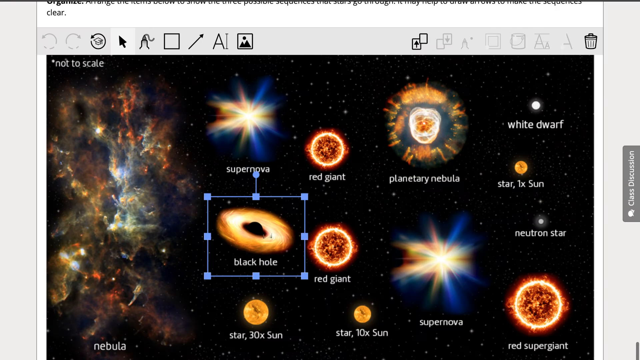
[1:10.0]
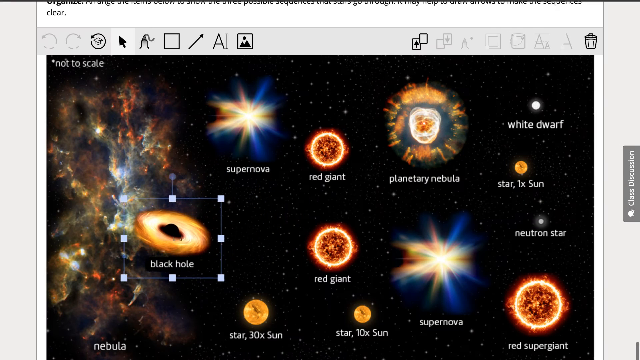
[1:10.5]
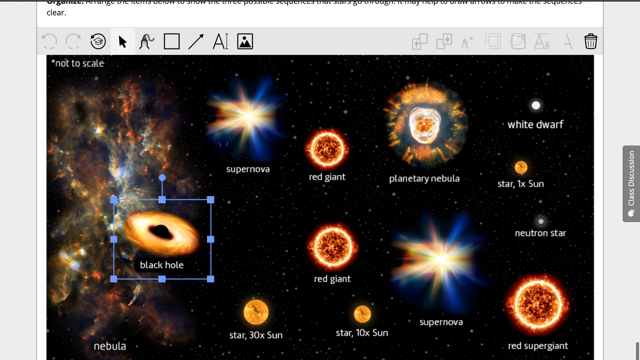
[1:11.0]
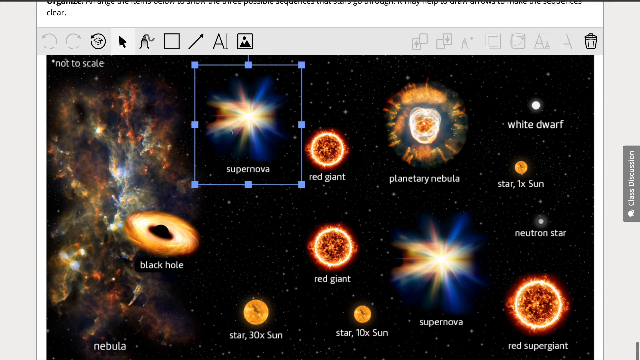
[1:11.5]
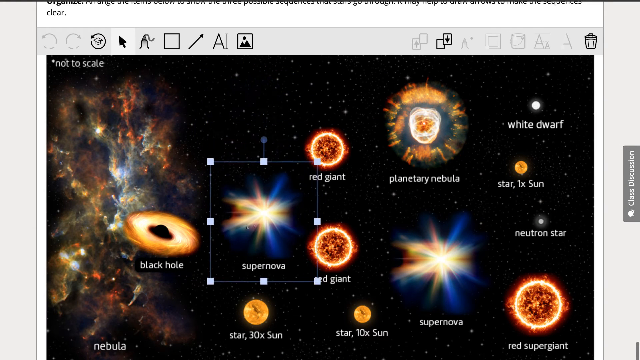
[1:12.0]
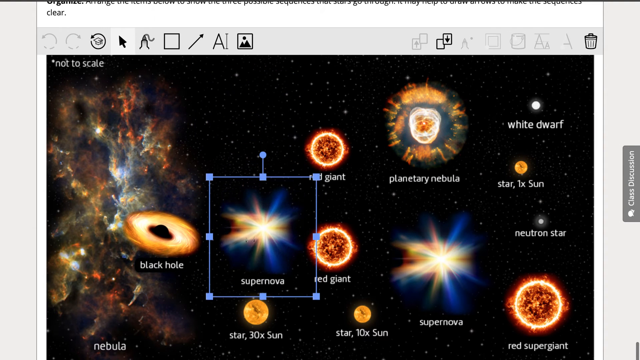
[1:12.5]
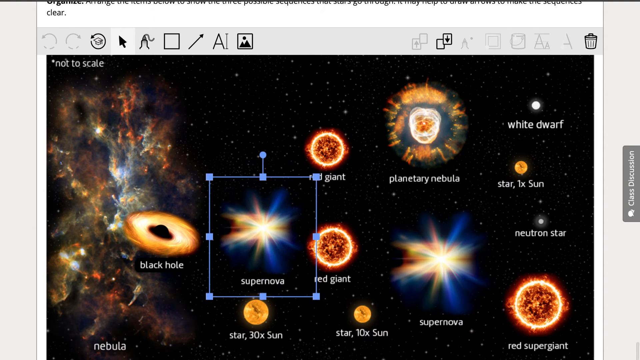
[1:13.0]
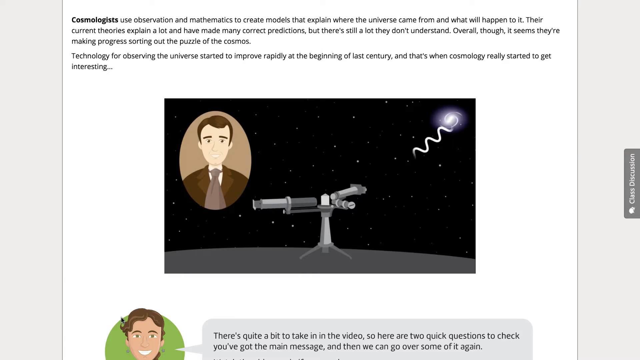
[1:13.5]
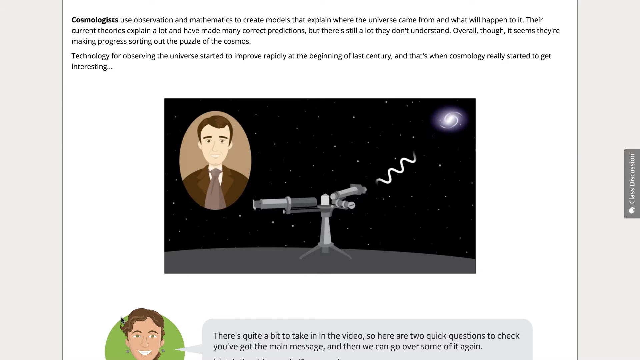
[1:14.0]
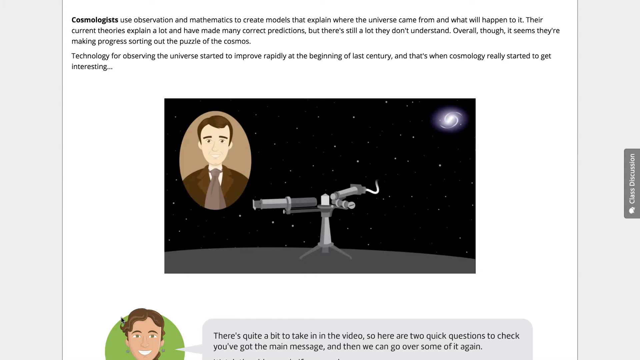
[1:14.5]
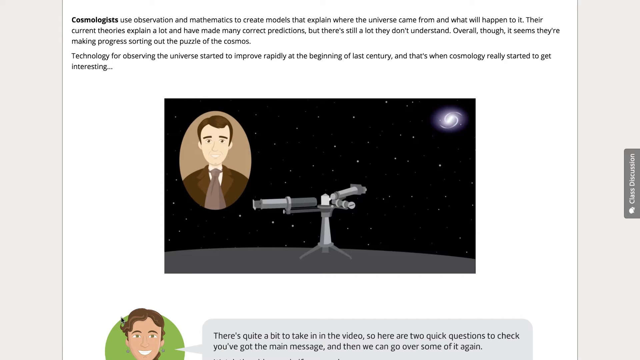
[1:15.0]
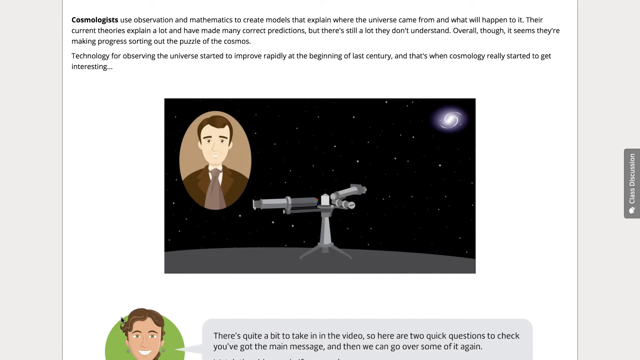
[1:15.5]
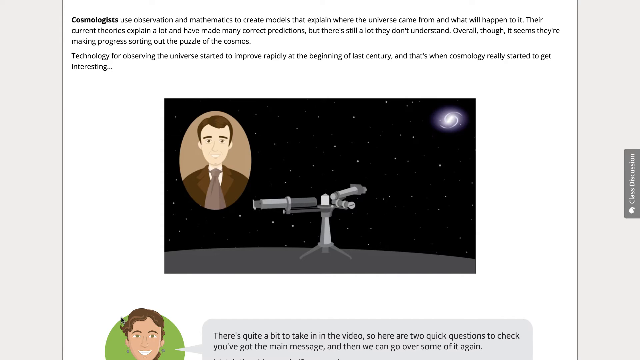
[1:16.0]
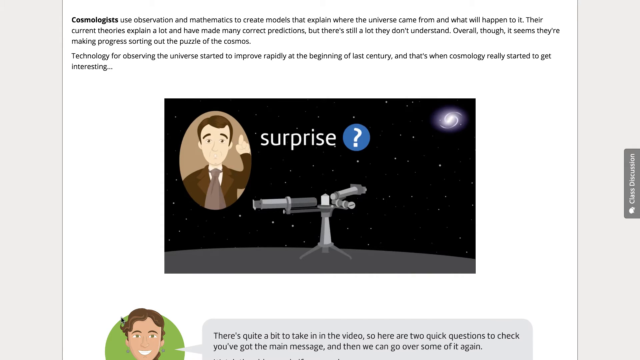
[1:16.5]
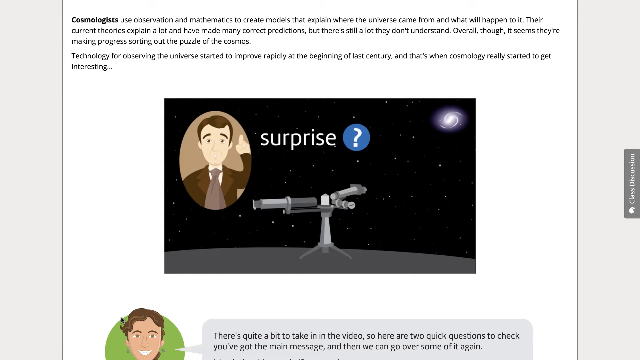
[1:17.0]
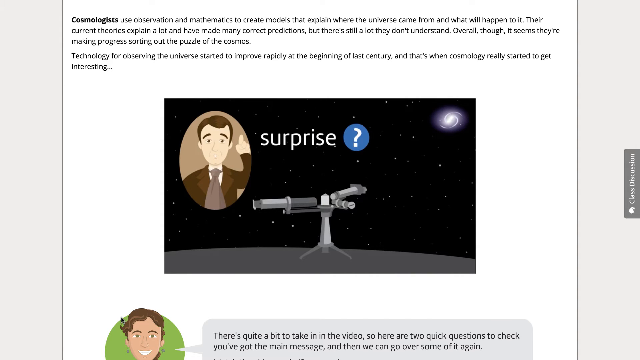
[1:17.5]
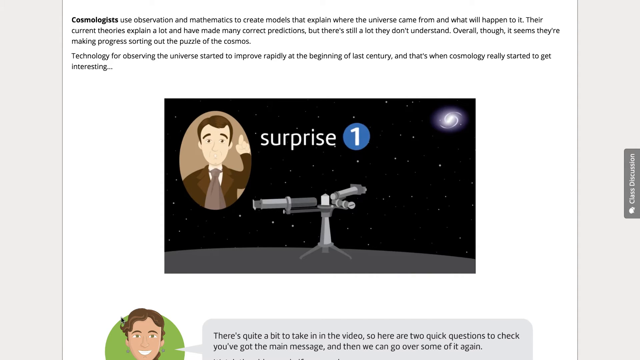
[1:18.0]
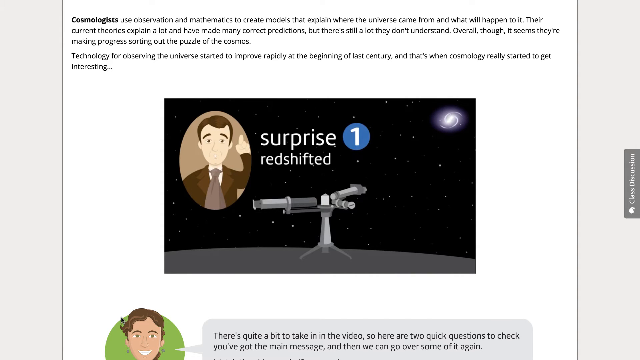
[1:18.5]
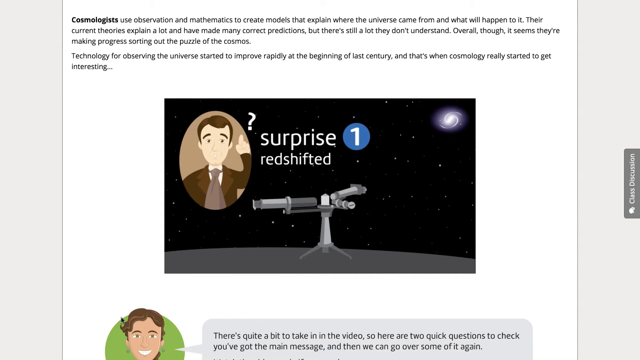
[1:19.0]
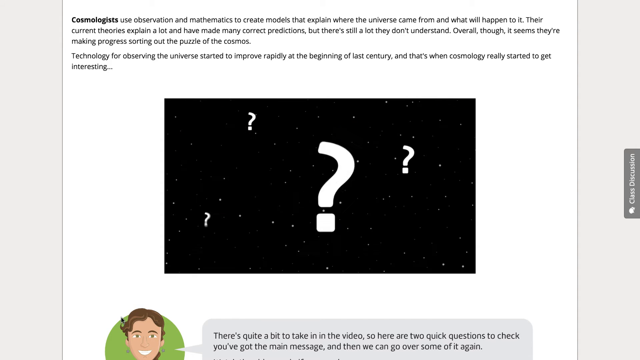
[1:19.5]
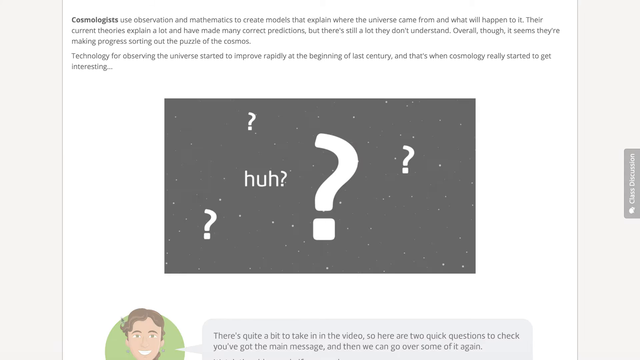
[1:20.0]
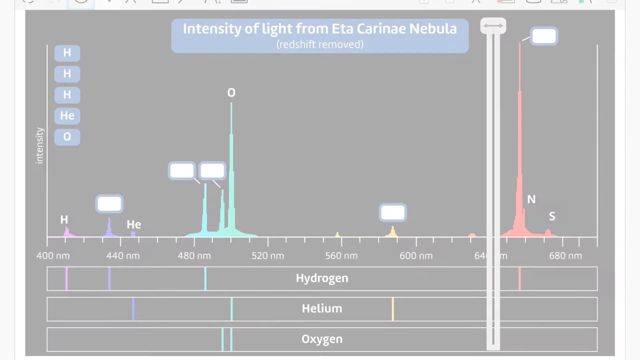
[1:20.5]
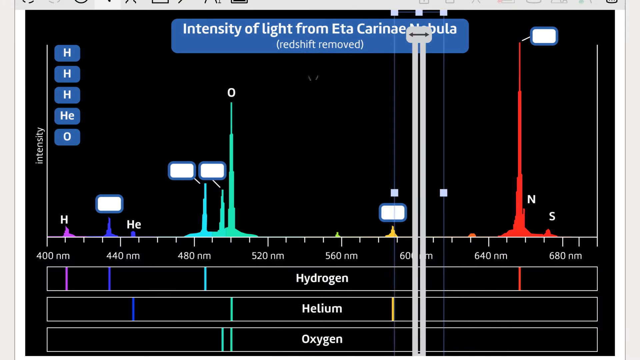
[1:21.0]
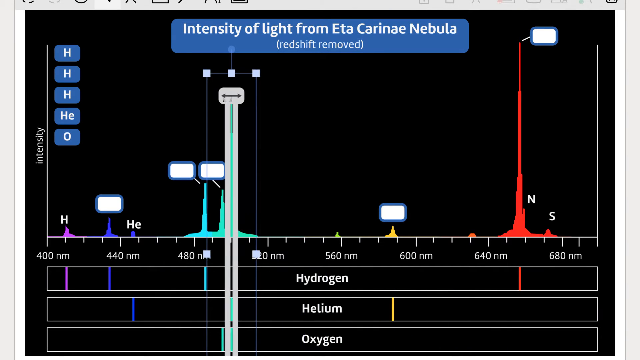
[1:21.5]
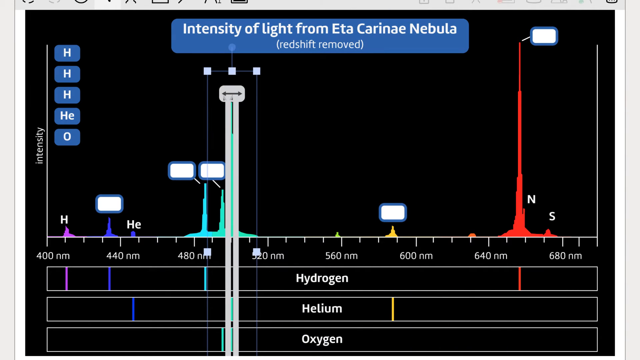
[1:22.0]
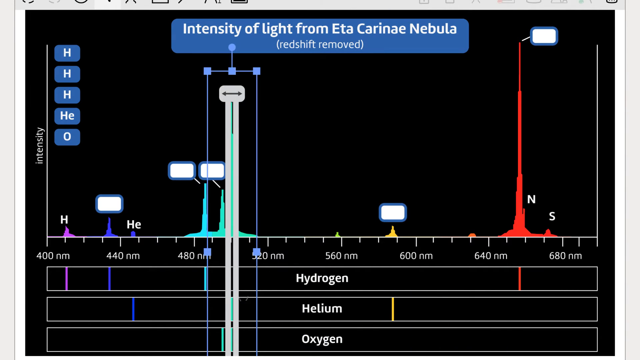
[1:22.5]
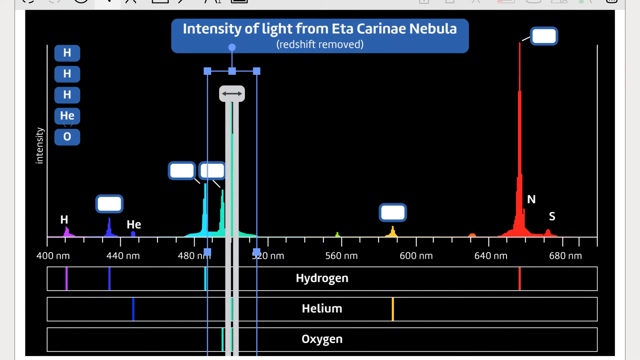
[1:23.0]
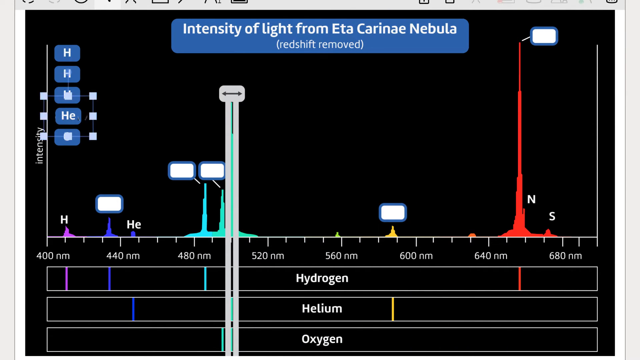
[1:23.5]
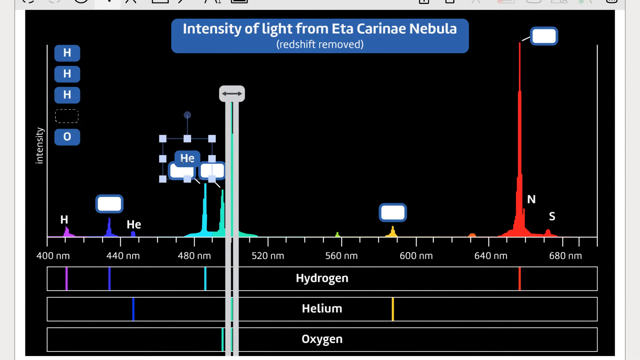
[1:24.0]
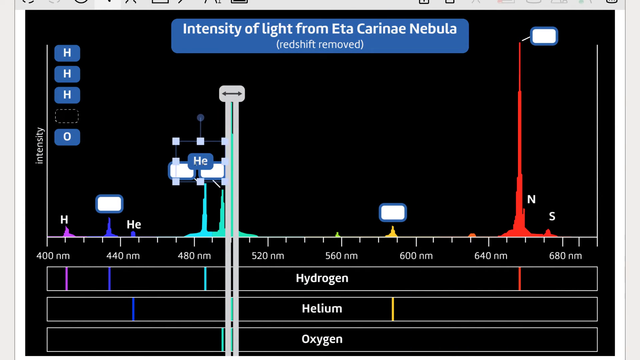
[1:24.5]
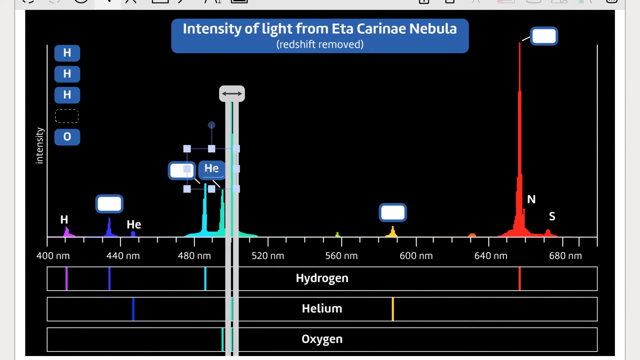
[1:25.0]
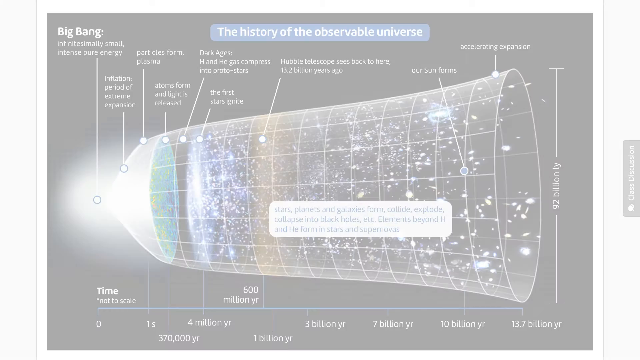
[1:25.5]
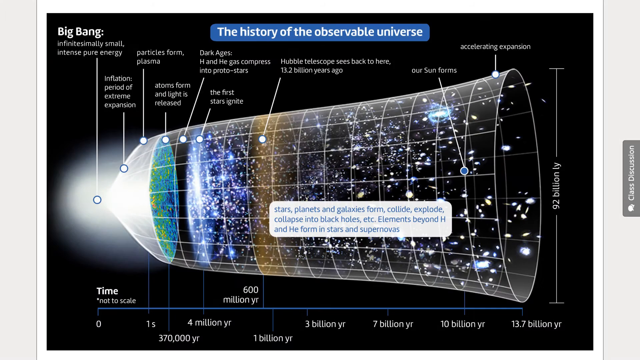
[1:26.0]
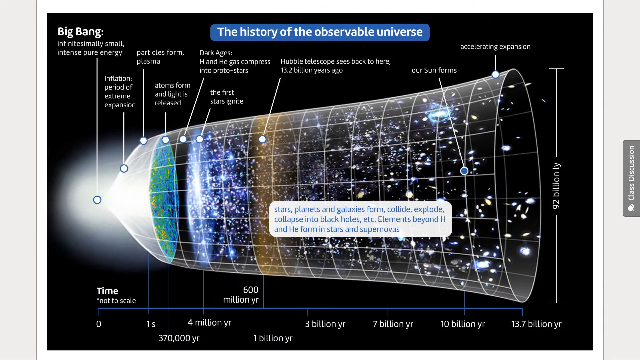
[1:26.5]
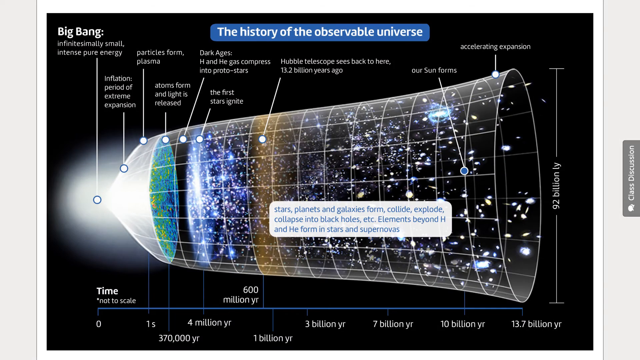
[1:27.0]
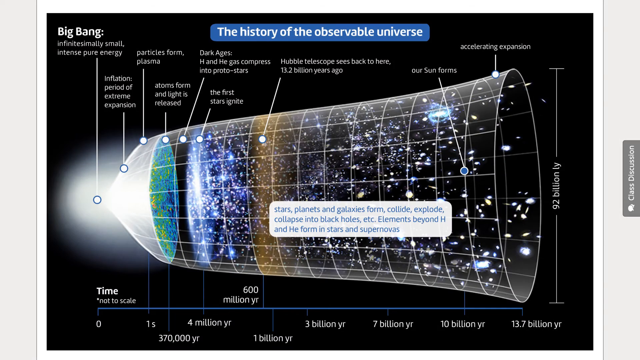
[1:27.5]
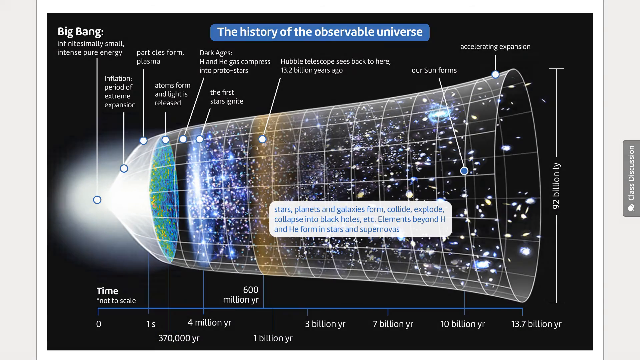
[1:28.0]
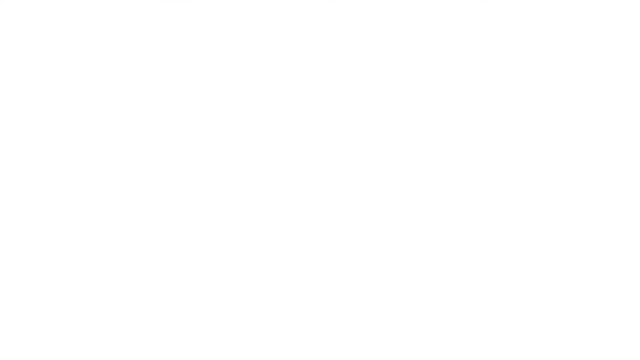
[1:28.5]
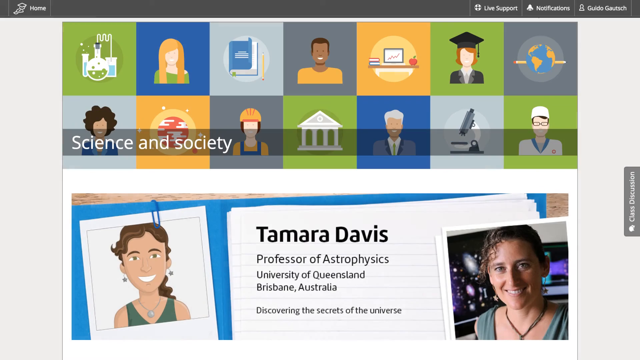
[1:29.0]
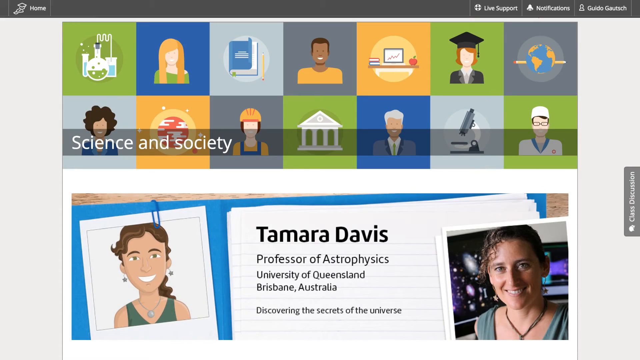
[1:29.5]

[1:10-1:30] Photos of the different kinds of stars appear to be moved around within an image showing where they are placed in the universe, including stars, black holes and suns. Next, a telescope appears along with a question. Then different gases such as hydrogen and helium are shown, with where those gases are placed. Another person, named Tamara Davis, appears; she is probably an astronomer guiding the students in the course, showing different questions and things to think about.